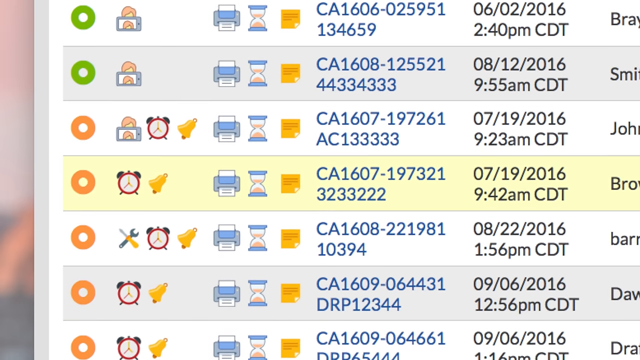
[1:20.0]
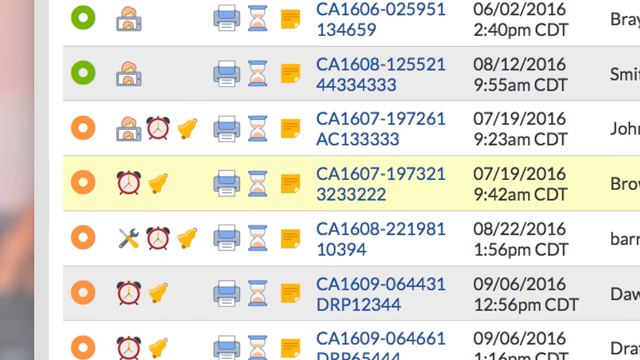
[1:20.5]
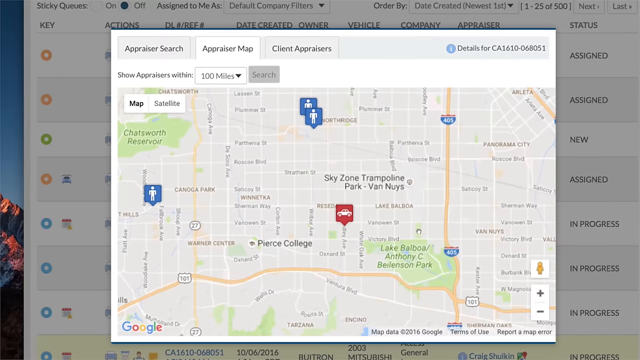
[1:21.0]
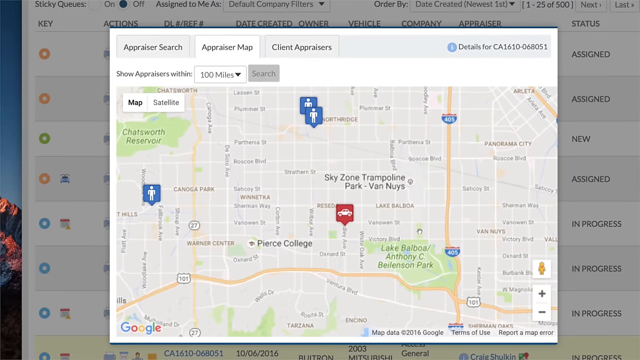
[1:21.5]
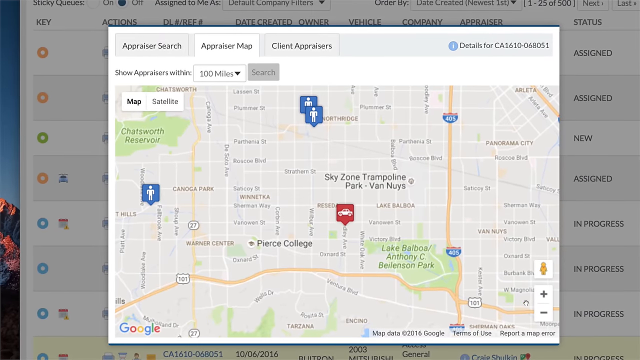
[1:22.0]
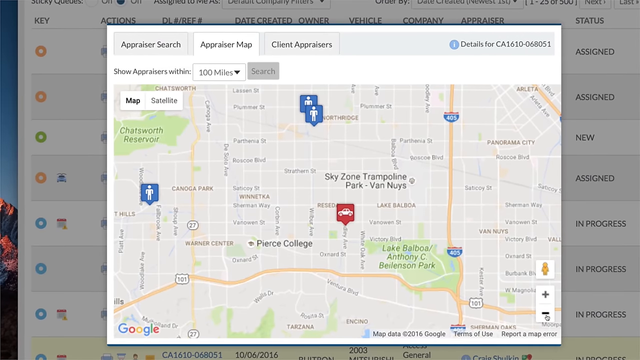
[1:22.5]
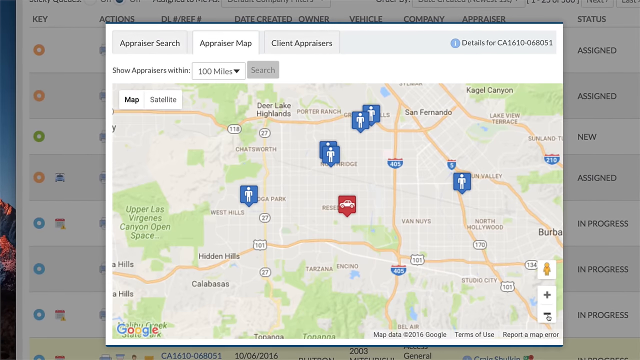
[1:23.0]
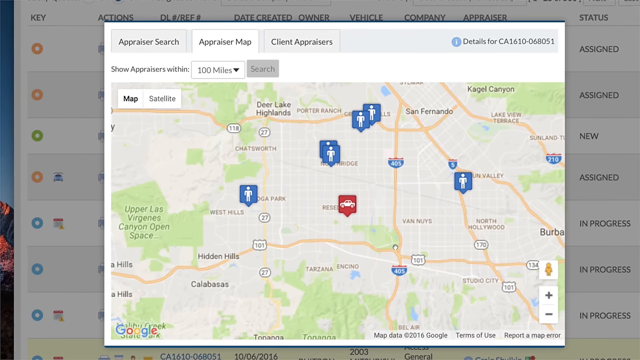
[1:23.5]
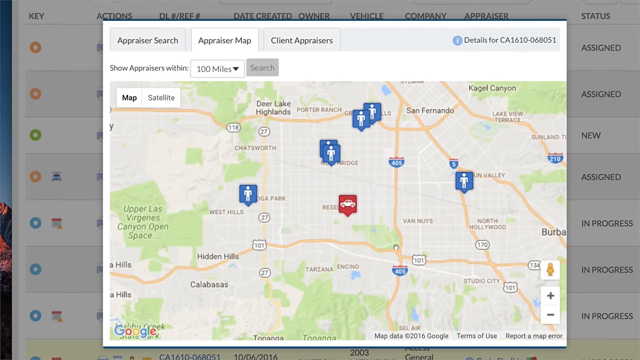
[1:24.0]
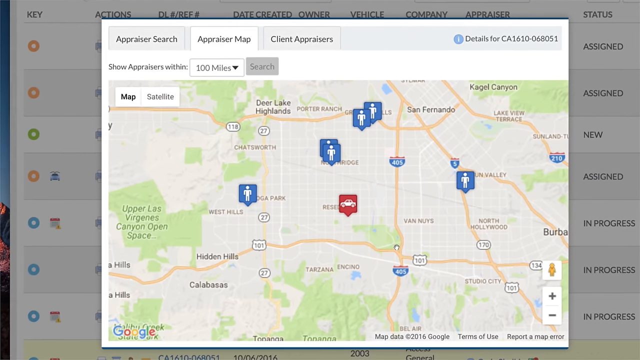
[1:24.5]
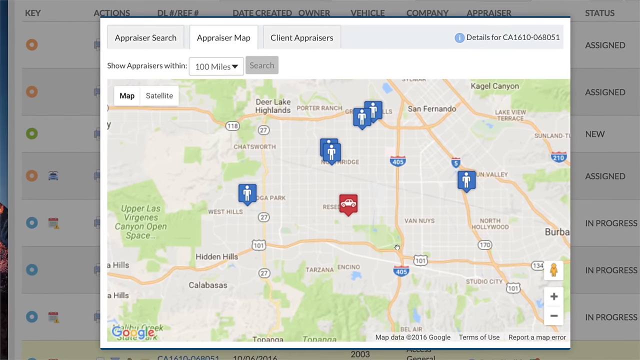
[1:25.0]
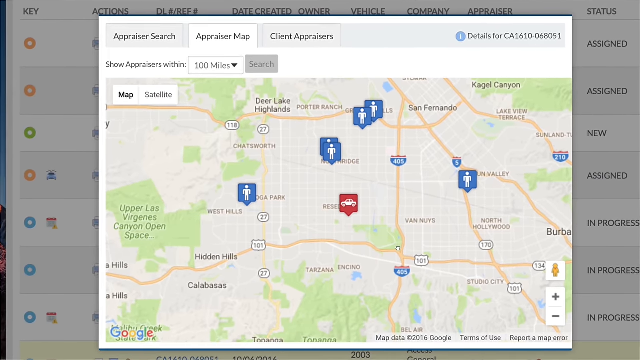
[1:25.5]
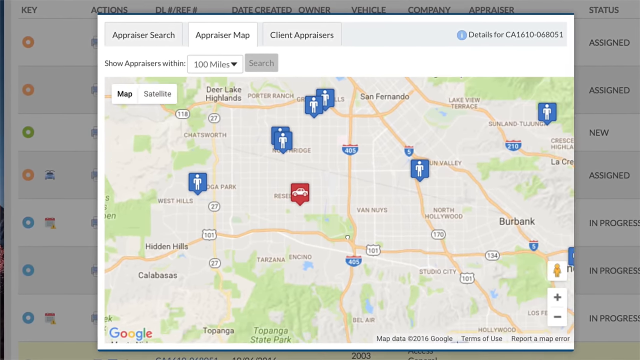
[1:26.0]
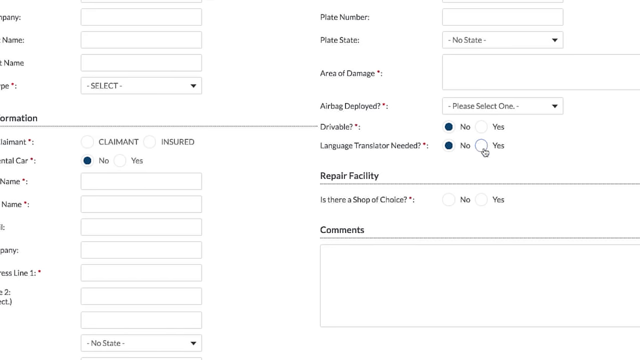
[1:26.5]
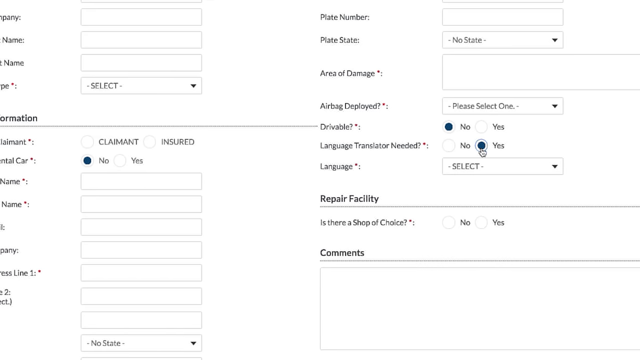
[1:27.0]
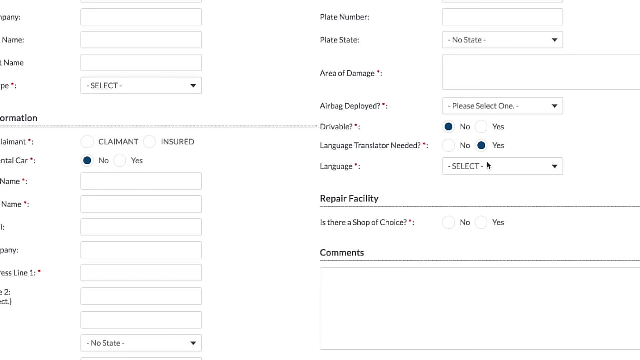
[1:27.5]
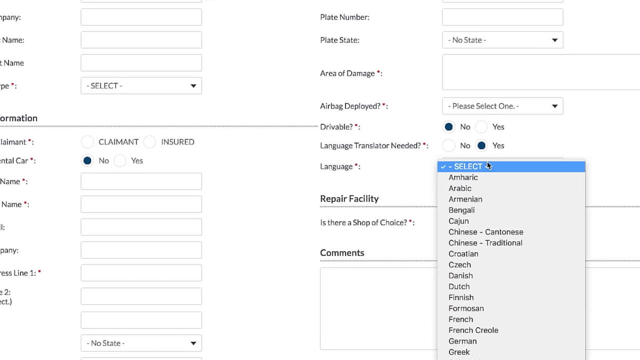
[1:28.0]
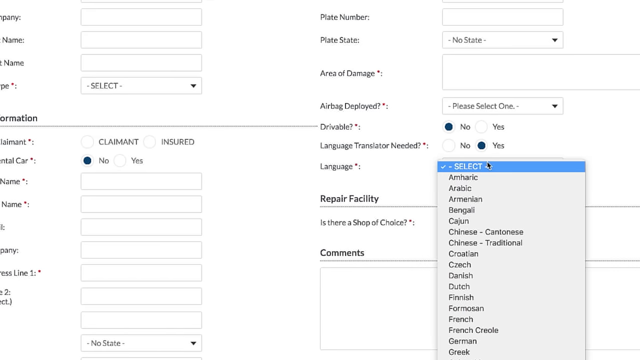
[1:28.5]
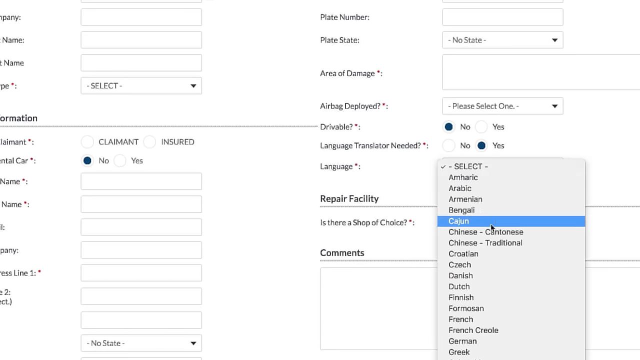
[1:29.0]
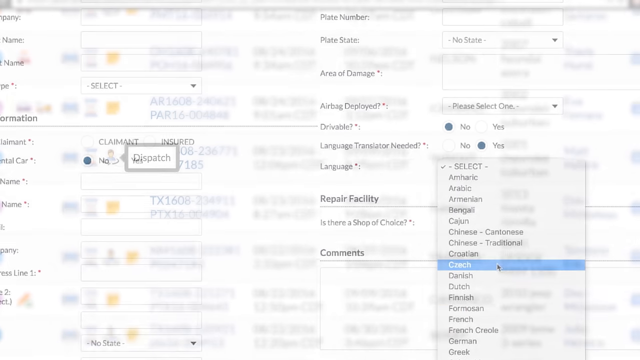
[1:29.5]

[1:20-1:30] A map is superimposed over the web page window. At the top left are three tabs: appraiser search, appraiser map, and client appraisers. To their right is an icon of a blue circle with a white lowercase letter "i" and the words "details for CA 1610-068051". The appraiser map tab is highlighted, and below it is a drop-down box that says "show appraisers within 100 miles" and a grey box marked "search". Below that is a map of an area with Skyzone Trampoline Park in the middle and Lake Balboa Antony C. Buitenson's Park to the bottom right of it. In the middle is a red pushpin marker, square with a triangular tab at the bottom and a picture of a white vehicle. Above it, towards the top of the map, are two blue pushpins of a similar shape with a white person printed on them, and to the right near Kanoka Park there is a blue pushpin. The map scrolls out to show two additional blue pushpins, one by Kanoka Park and one by a valley, and two further up near San Fernando and Porter Ranch at the north of the map. The Upper Las Verganas Canyon open space is on the west of the map. Another form then opens with lots of form fields to fill in. The fields on the left cannot be seen in their entirety, but on the right are plate number, plate state, area of damage, airbag deployed, drivable, and language translator needed. The arrow cursor selects yes, which opens a drop-down box below marked language, and selects a language.